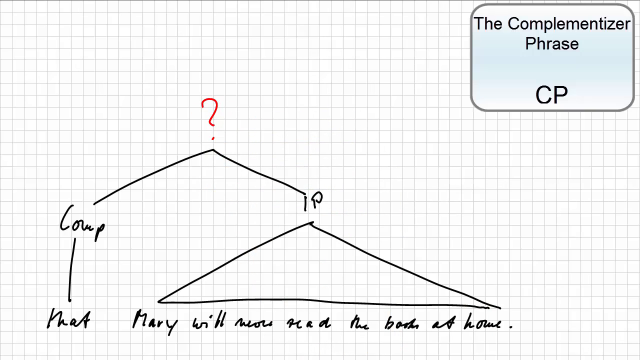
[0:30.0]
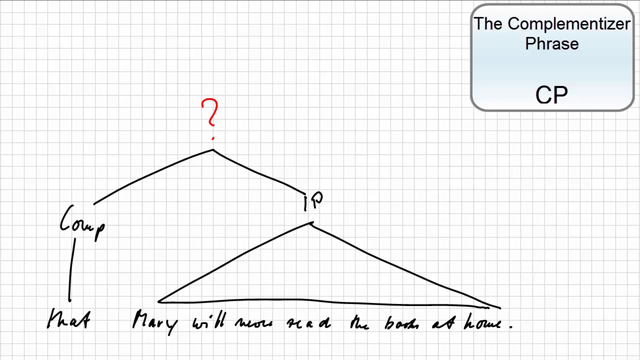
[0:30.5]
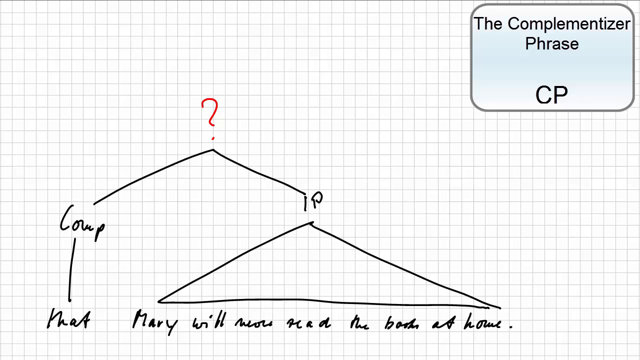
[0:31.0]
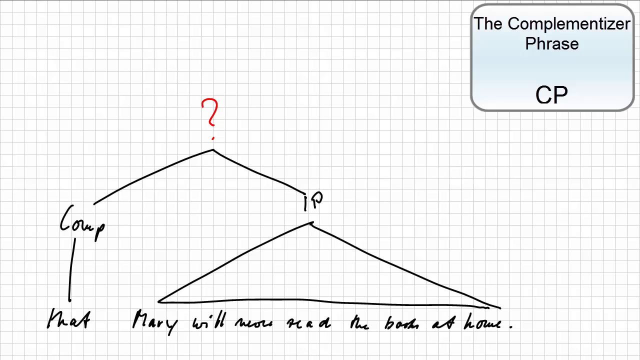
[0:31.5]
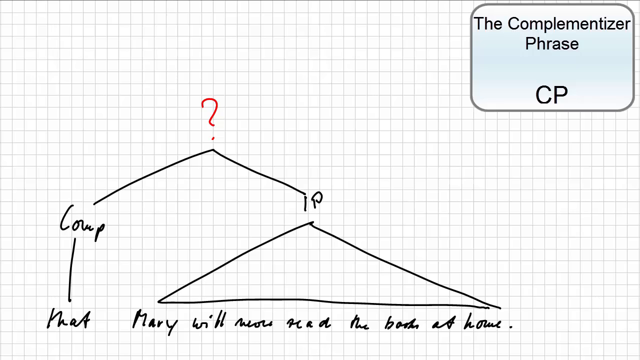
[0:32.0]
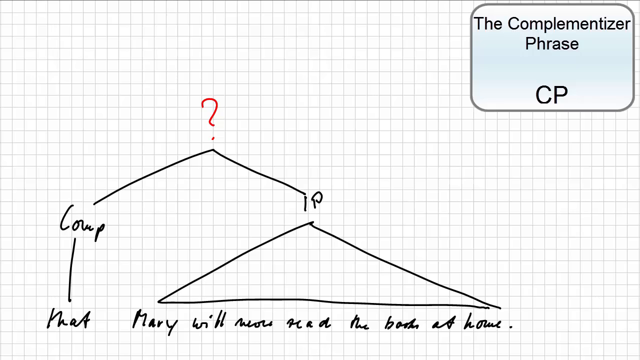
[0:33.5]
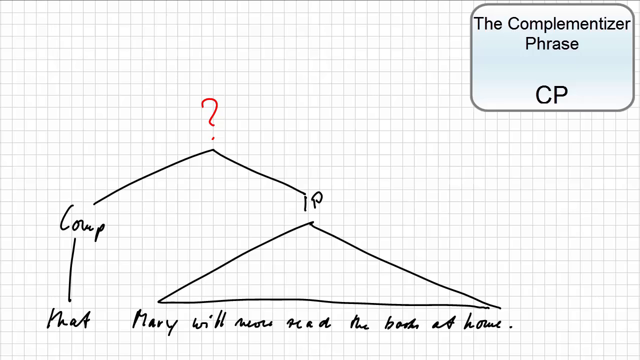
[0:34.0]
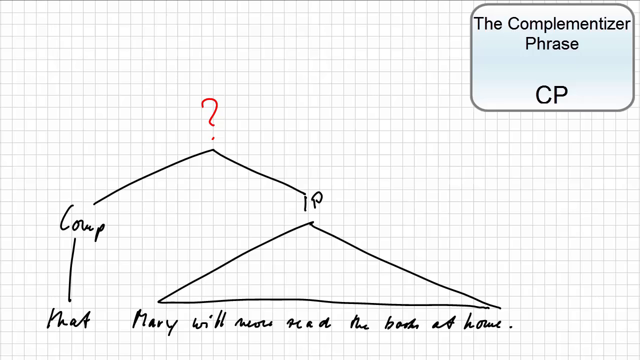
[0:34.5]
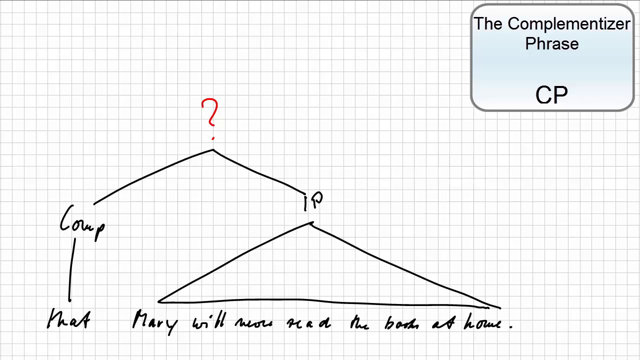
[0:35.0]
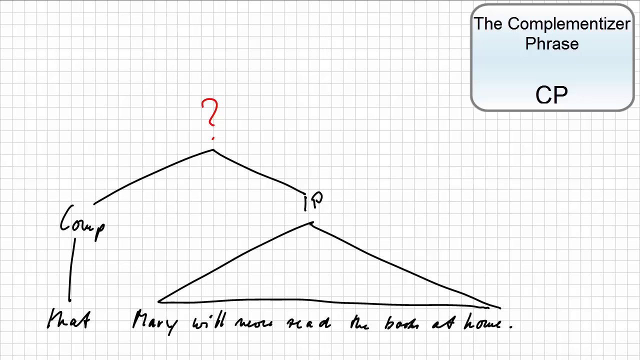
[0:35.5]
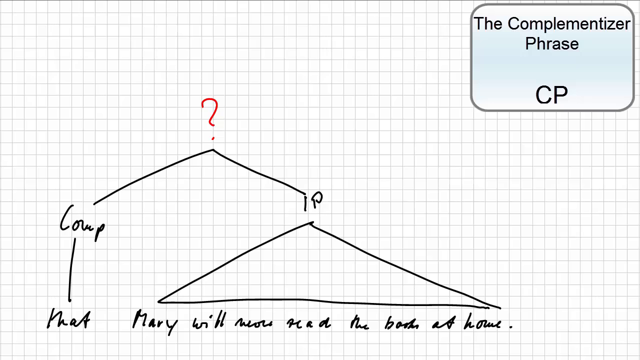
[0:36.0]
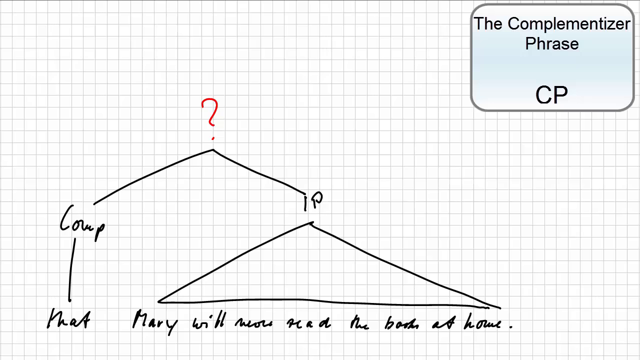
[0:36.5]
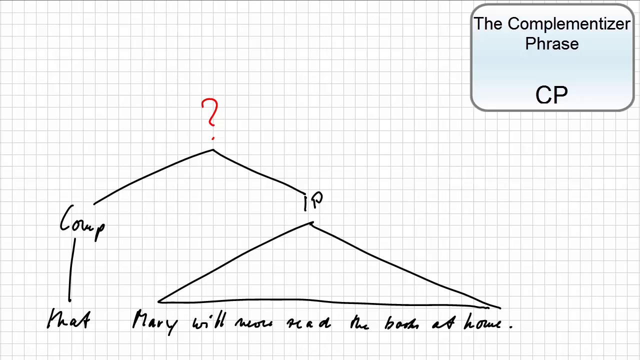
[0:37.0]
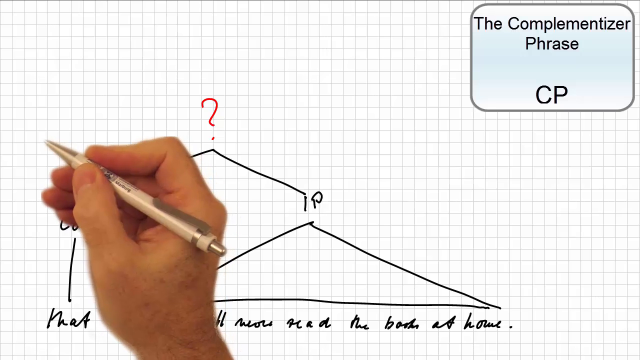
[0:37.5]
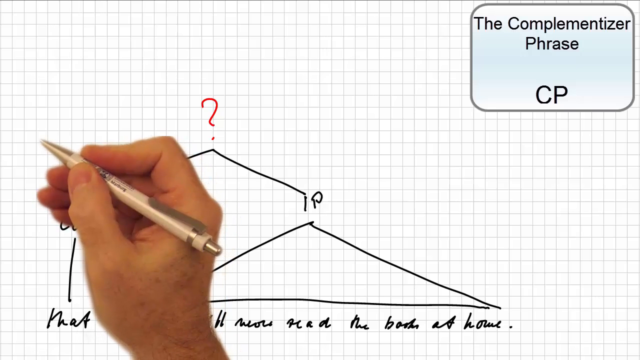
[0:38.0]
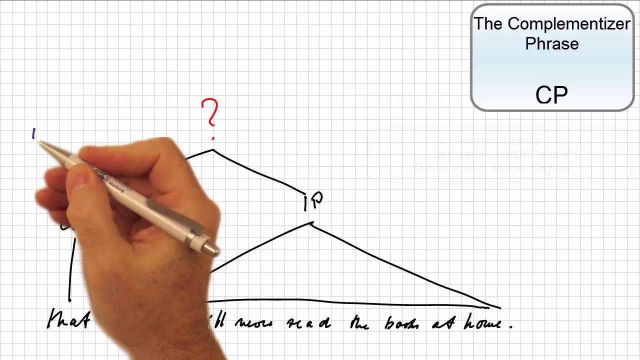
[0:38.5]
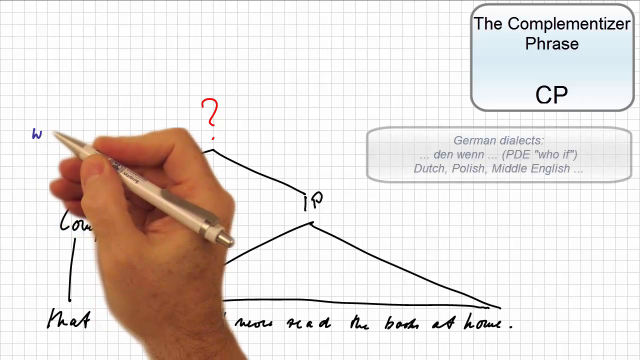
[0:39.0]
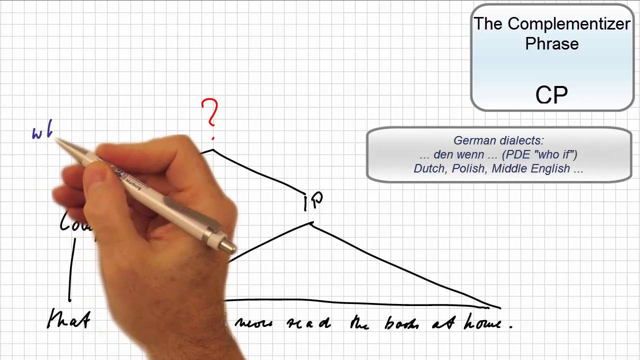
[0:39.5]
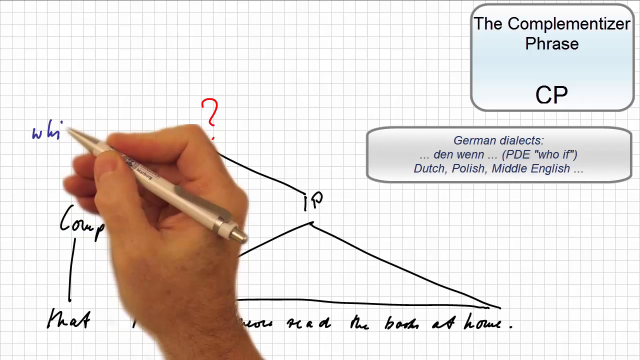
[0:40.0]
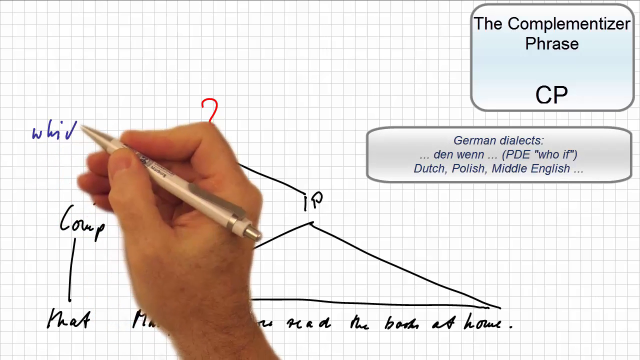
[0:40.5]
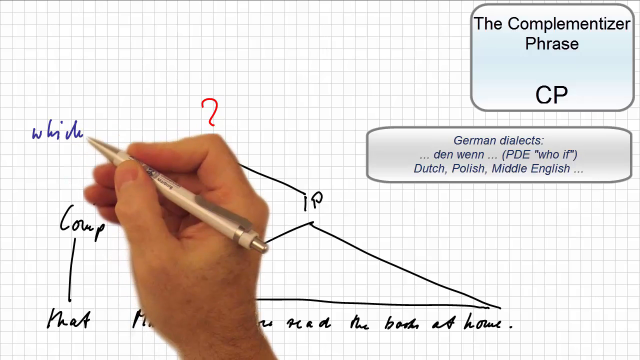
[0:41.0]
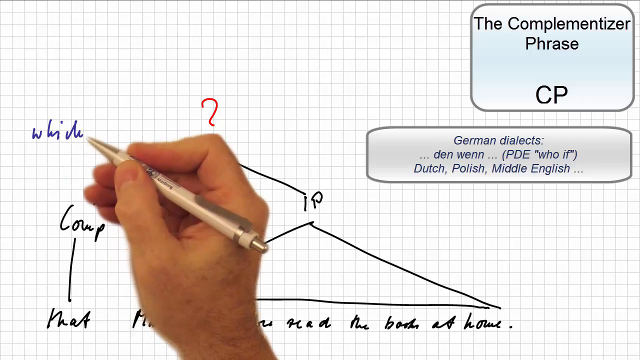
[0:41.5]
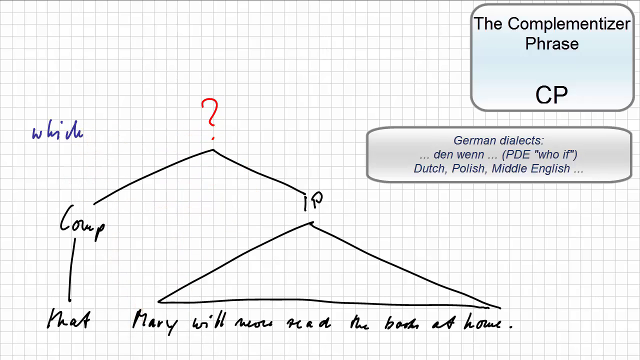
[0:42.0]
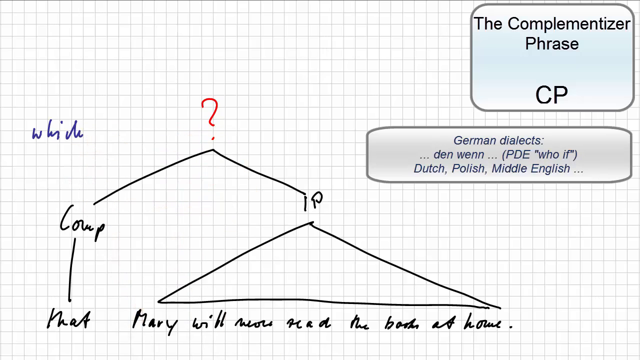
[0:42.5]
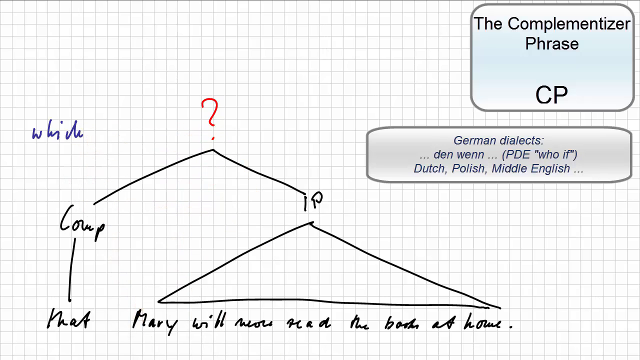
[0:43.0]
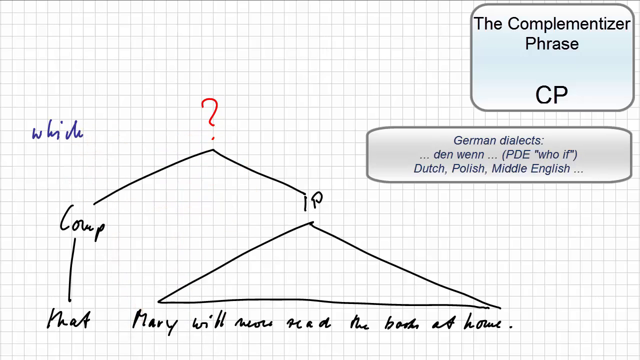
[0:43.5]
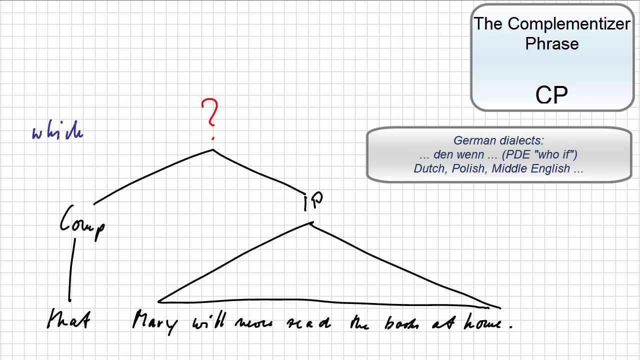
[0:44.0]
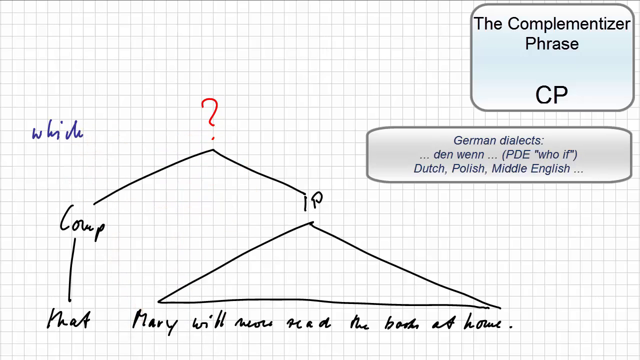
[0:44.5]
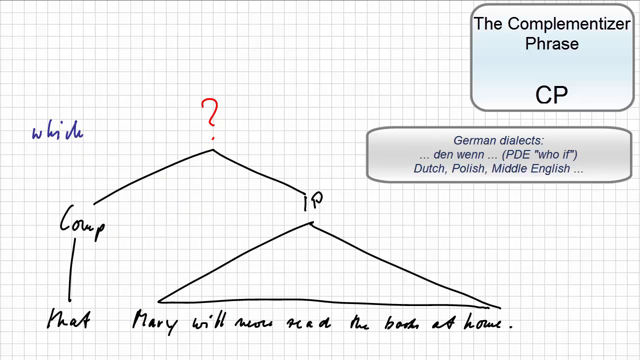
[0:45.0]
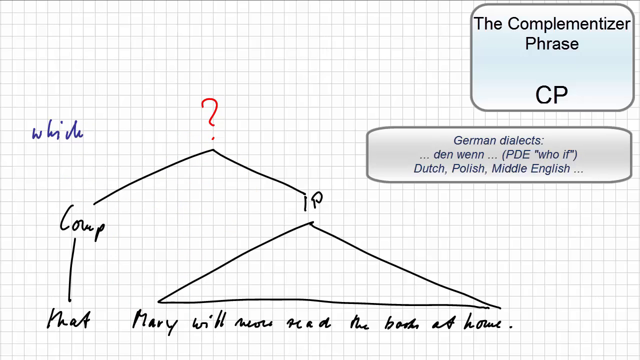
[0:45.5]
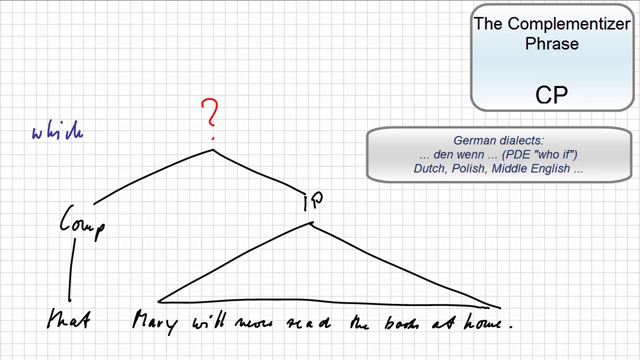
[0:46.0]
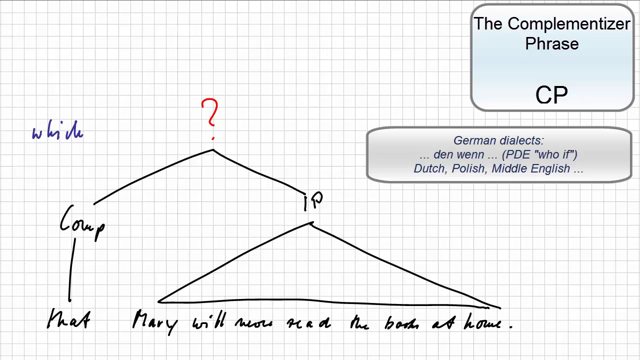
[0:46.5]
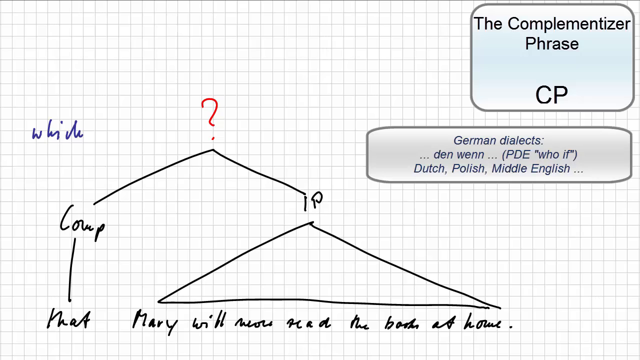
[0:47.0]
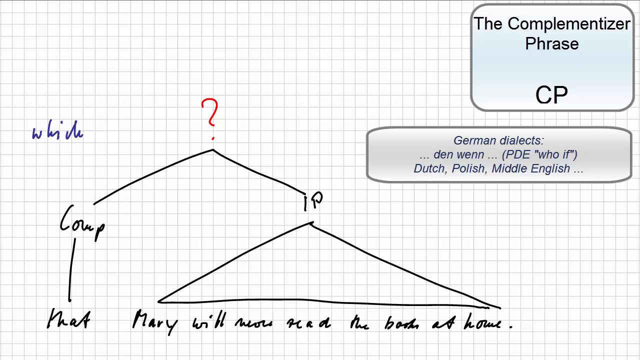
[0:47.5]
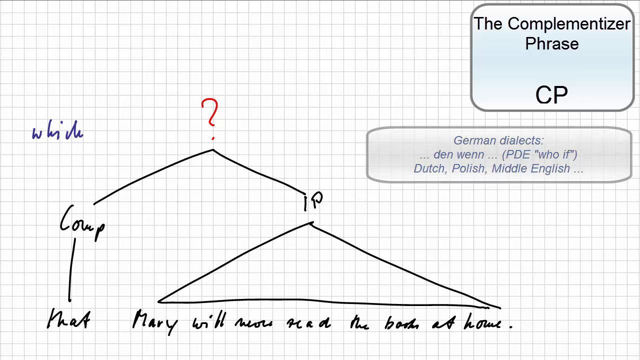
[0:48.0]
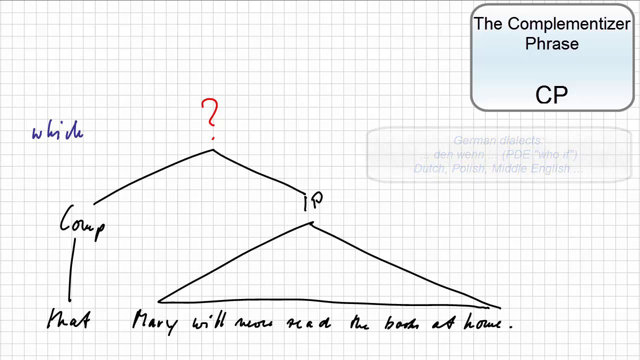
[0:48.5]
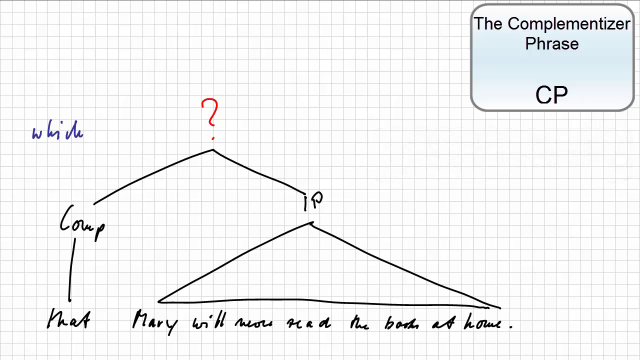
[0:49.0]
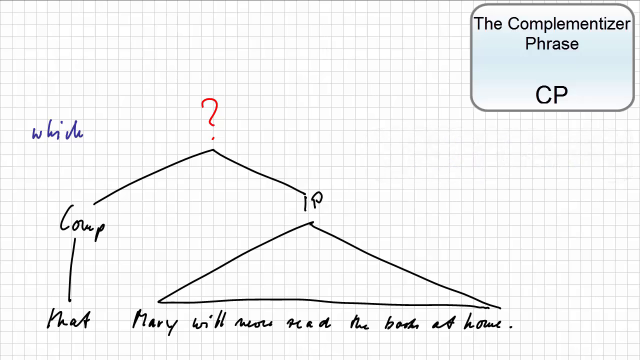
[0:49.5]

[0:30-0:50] The complementizer phrase, labeled "CP", is shown, and a man has drawn a triangle. At the bottom of the triangle is text in a white font reading "Mary will now read the book at home." On the left the word "math" is written, and at the top of the triangle he has written "IP". The elements are connected so that they form a kind of roof, with a question mark at the top of the roof. A man's hand appears holding a cream-colored pen, and he types "which" in a blue font. On the right side he has created a kind of comment that begins "German dialects".